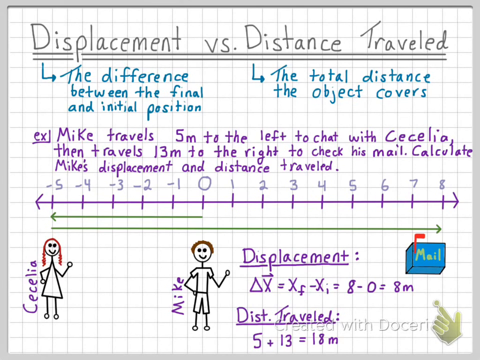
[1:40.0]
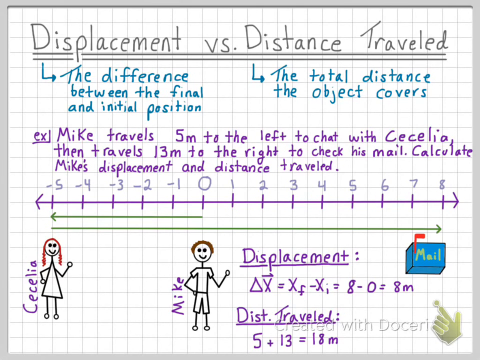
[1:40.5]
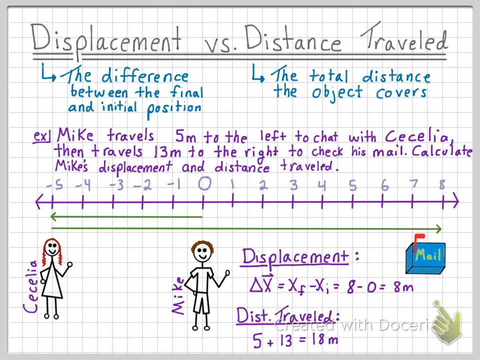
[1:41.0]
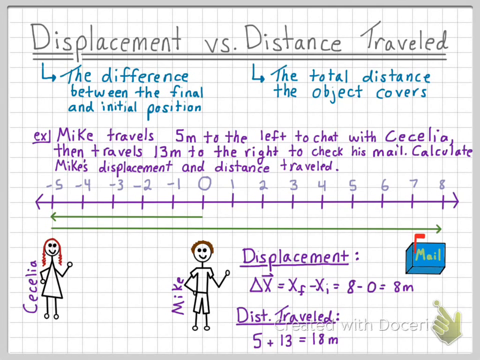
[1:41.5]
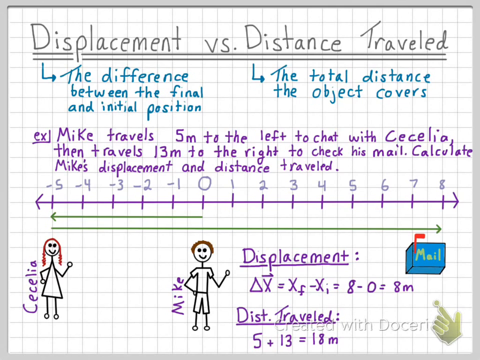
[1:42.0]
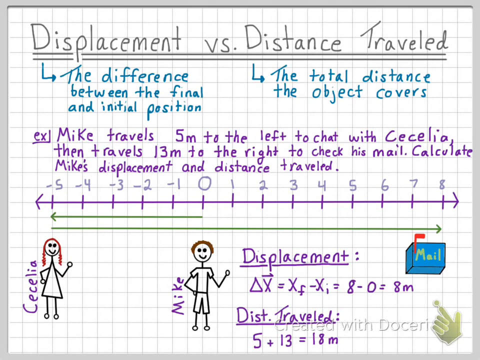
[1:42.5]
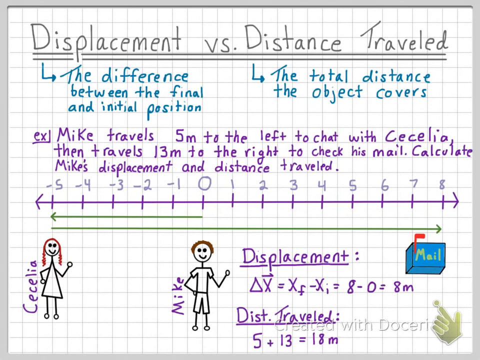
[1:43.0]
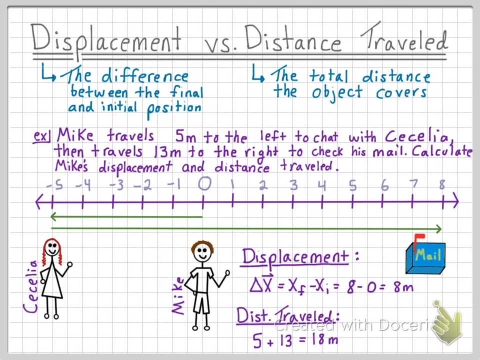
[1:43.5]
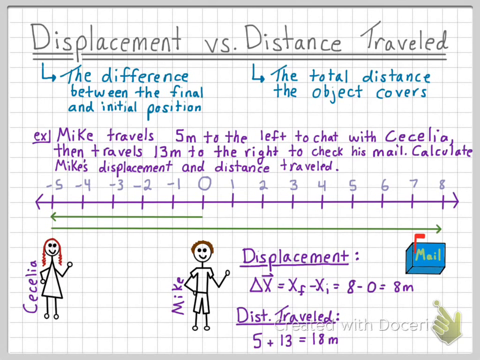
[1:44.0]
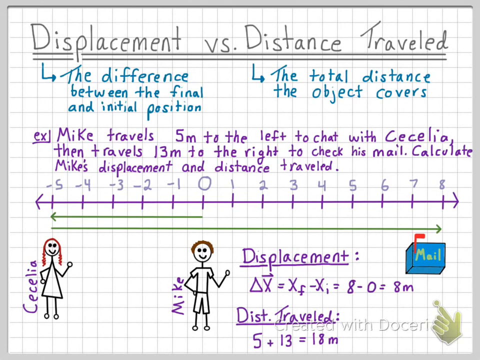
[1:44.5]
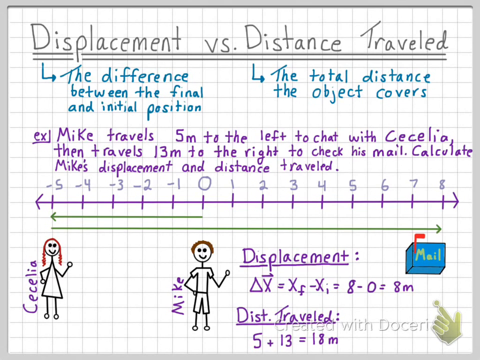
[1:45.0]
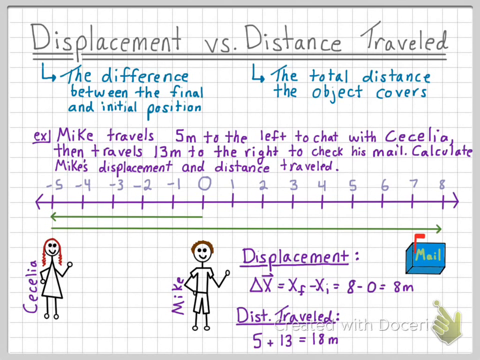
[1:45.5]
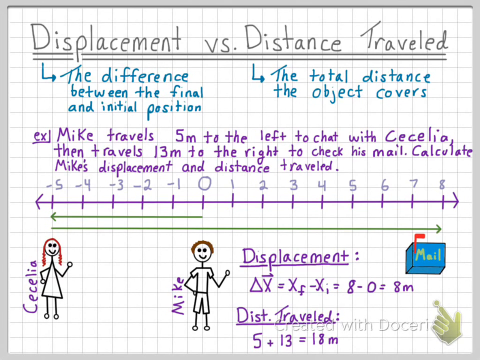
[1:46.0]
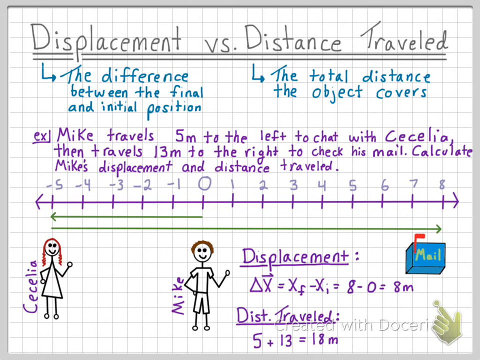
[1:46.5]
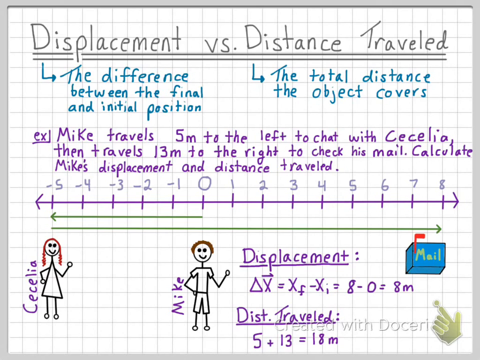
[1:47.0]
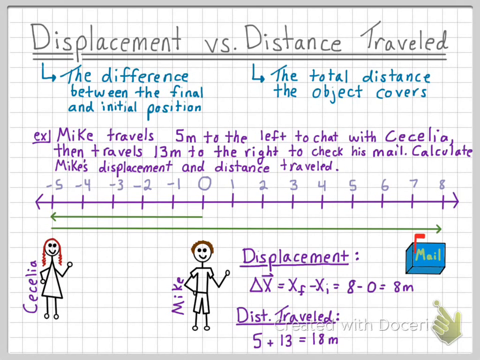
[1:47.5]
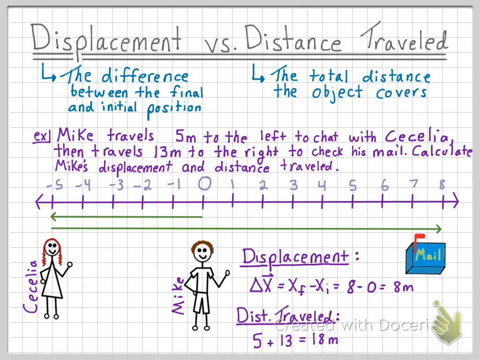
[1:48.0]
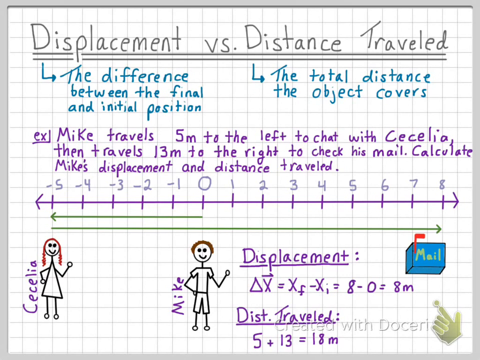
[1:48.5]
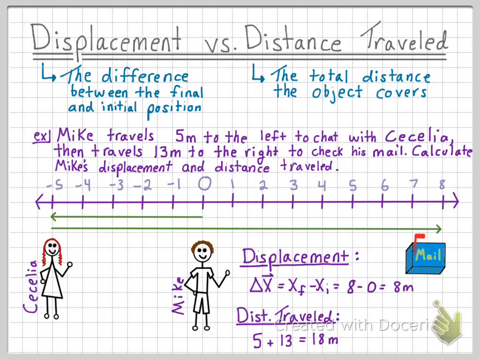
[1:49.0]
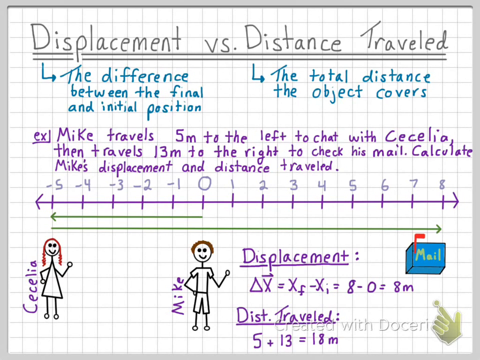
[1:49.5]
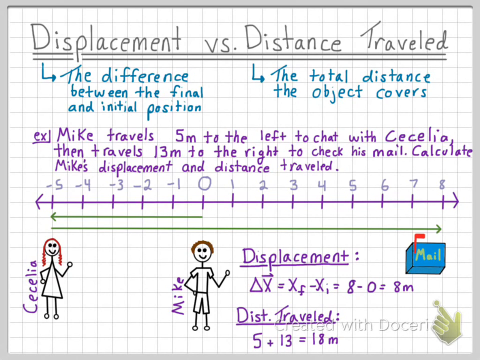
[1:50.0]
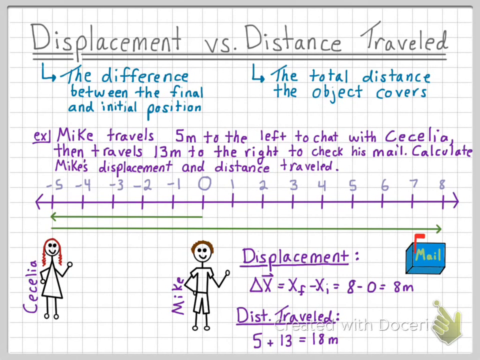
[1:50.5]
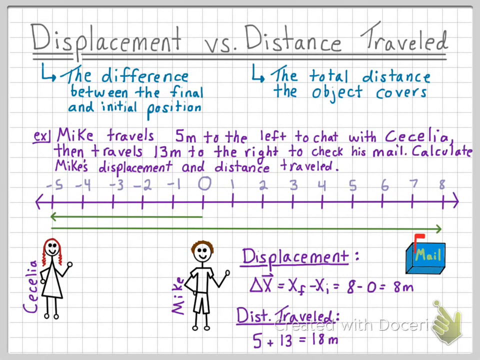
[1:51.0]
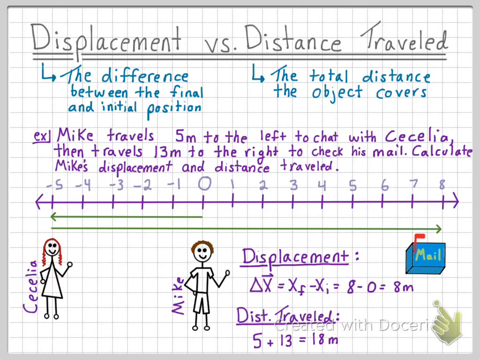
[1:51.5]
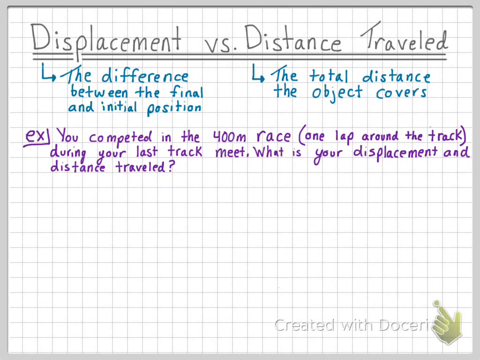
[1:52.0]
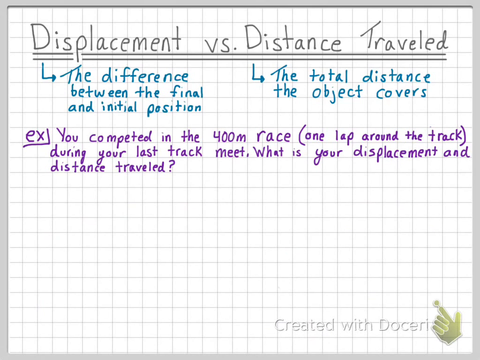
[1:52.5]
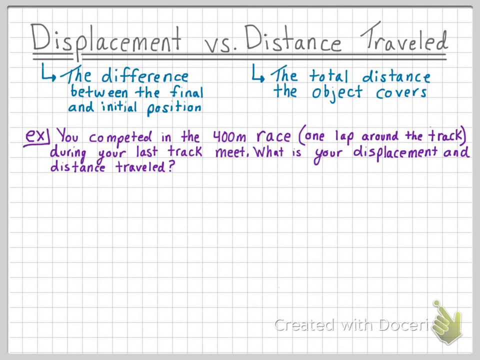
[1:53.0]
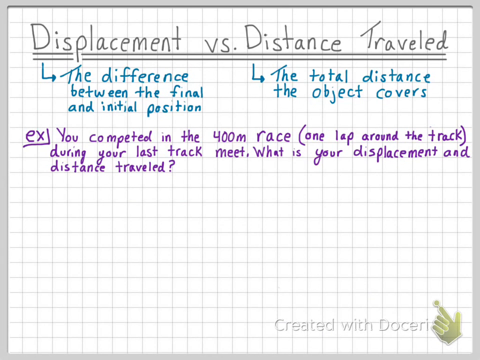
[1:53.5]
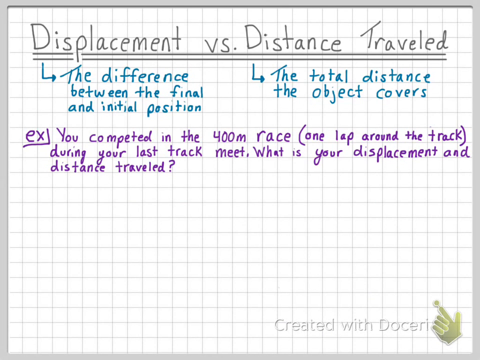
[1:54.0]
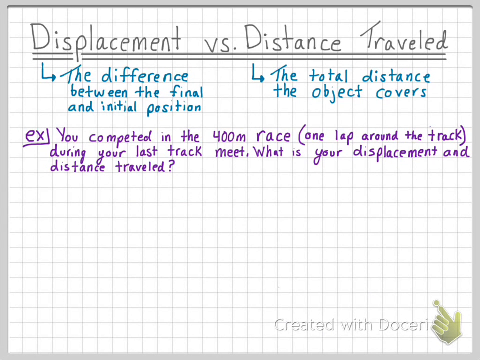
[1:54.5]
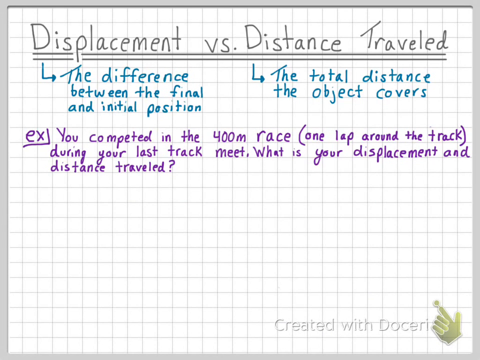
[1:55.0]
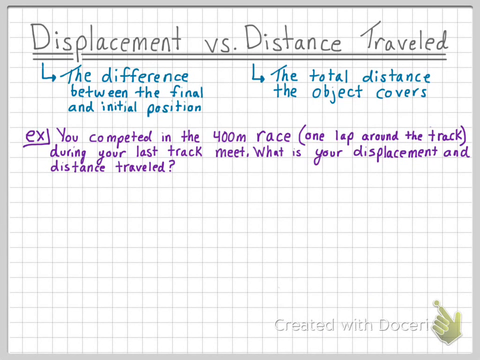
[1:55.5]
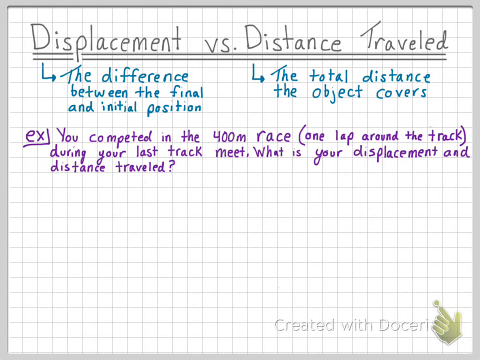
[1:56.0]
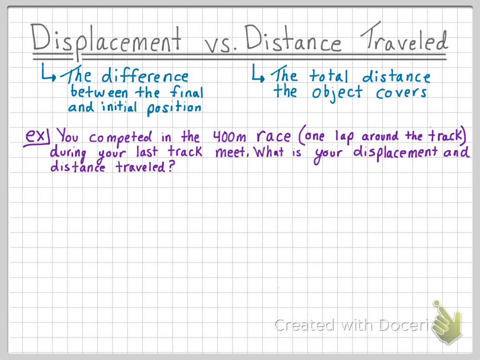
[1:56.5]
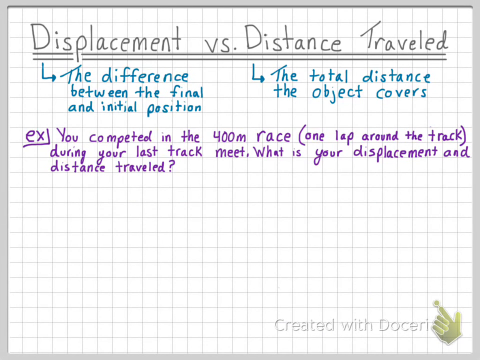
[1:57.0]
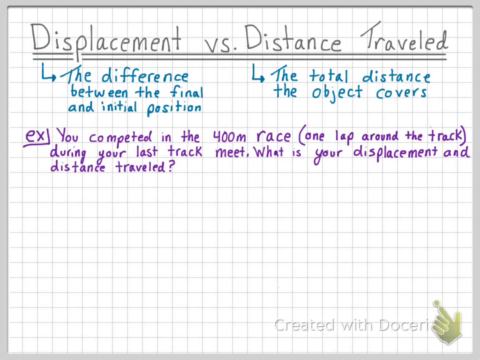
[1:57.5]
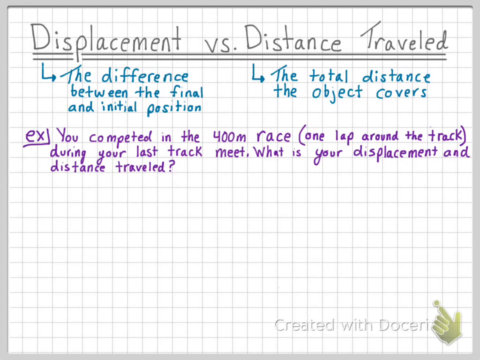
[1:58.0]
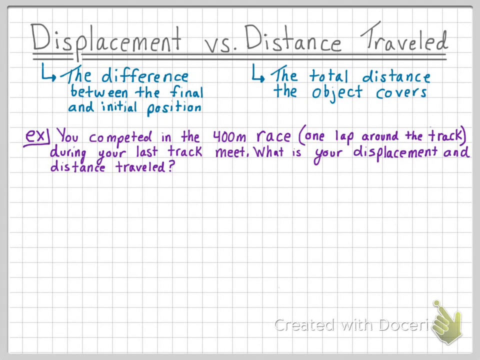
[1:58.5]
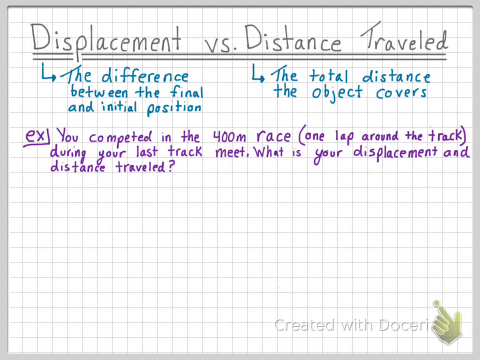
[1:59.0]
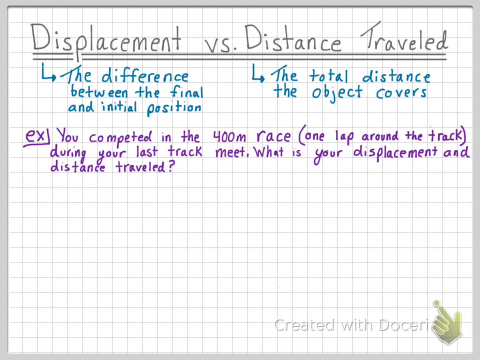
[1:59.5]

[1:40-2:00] The white grid board at first shows the same information: the stick figures, how far they went left and right, the displacement, the mailbox and the distance traveled. Then it changes: "displacement versus distance traveled" and its definitions remain at the top, but the Mike and Cecilia example is erased and a new example in purple appears about competing in a 400 meter race, one lap around the track, during the last track meet, asking "What is your displacement and distance traveled?"